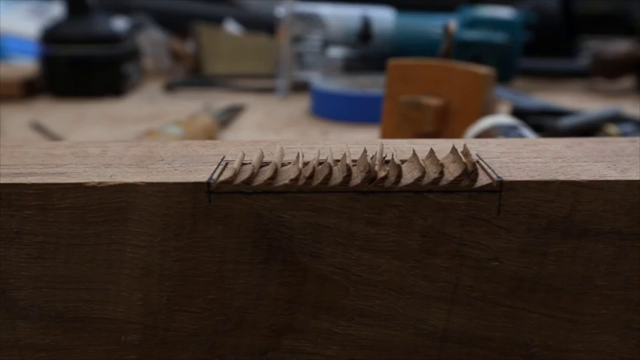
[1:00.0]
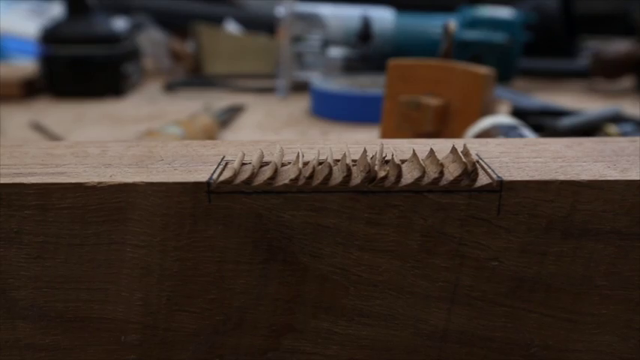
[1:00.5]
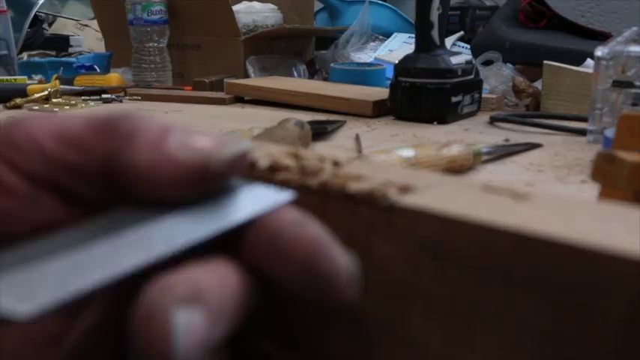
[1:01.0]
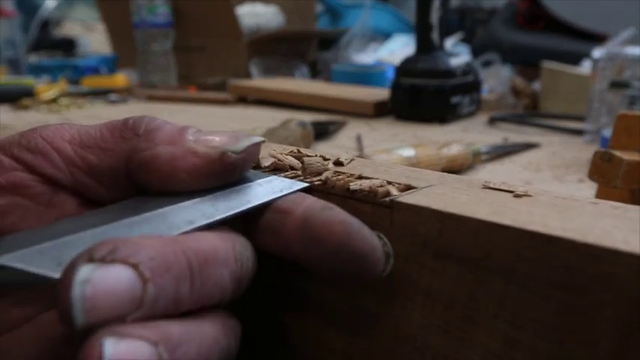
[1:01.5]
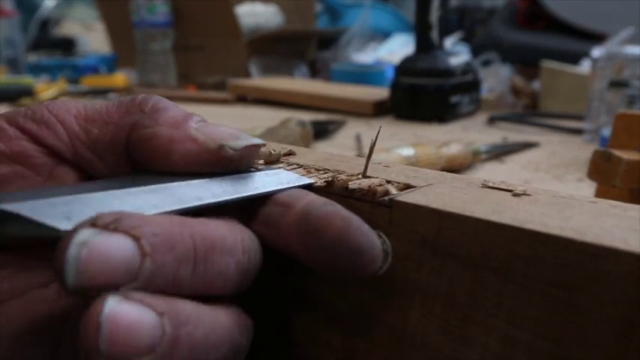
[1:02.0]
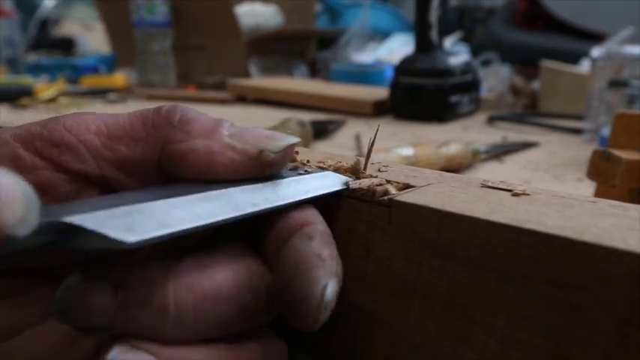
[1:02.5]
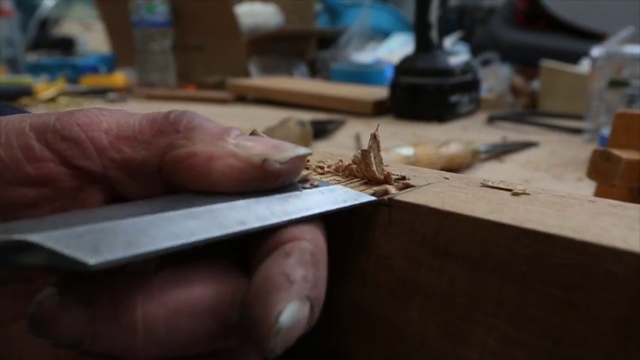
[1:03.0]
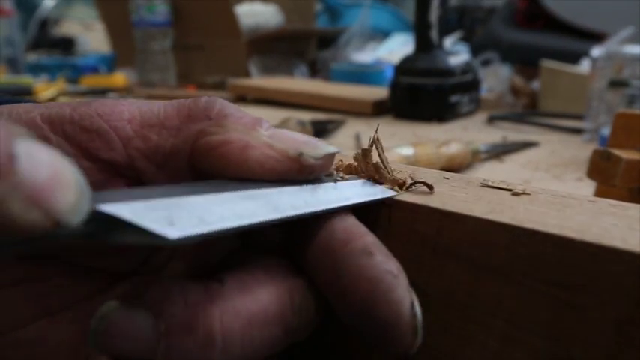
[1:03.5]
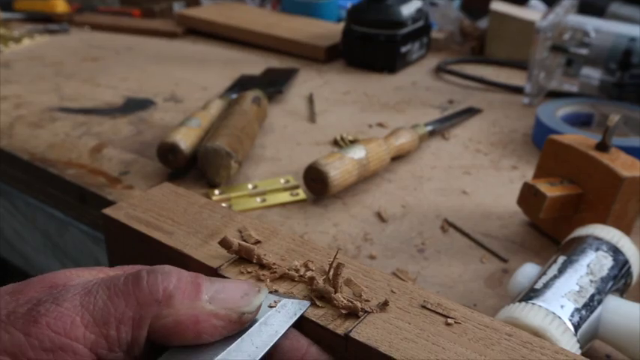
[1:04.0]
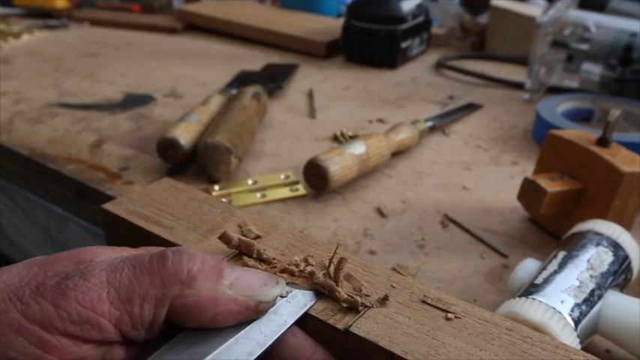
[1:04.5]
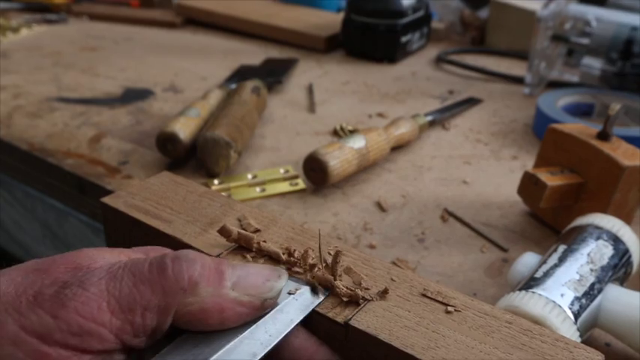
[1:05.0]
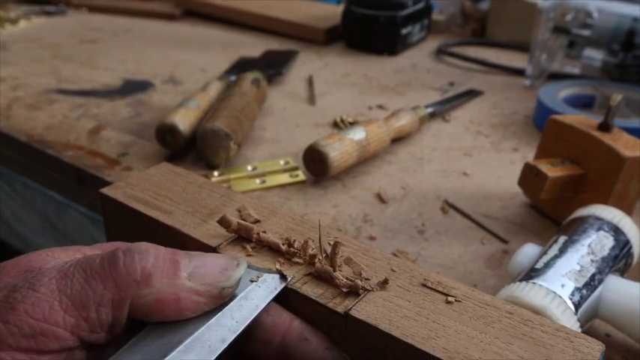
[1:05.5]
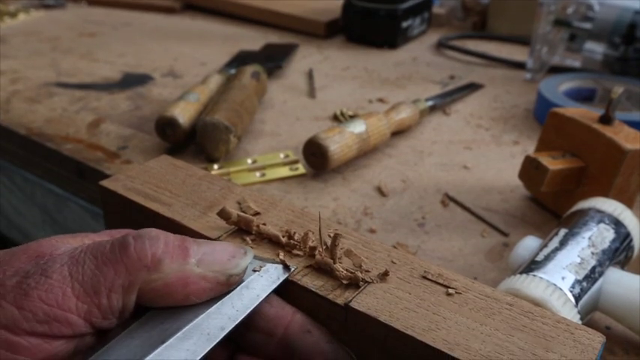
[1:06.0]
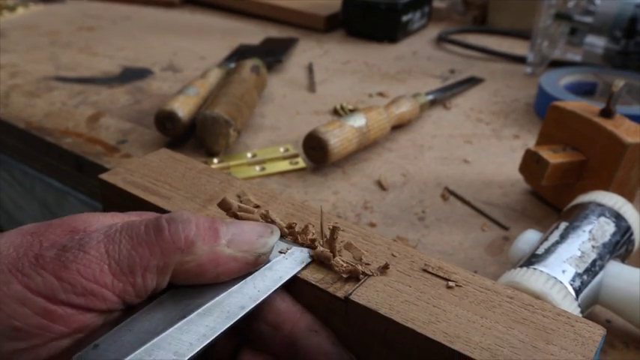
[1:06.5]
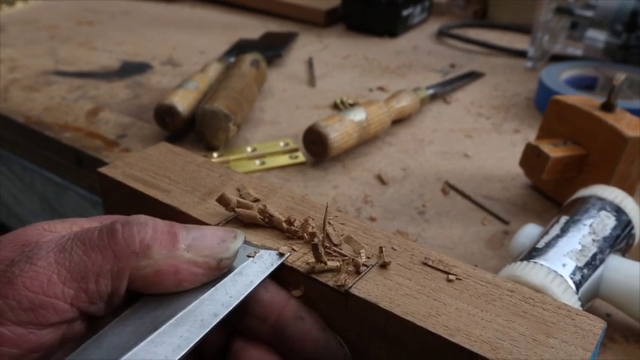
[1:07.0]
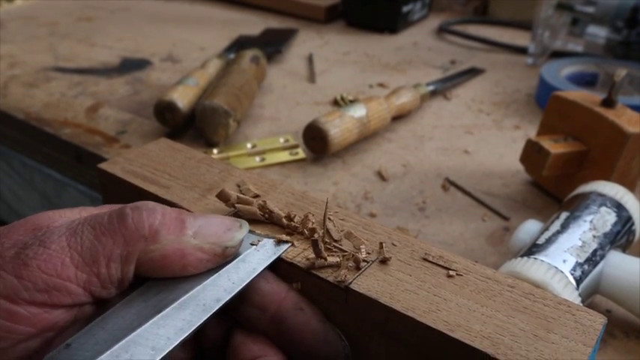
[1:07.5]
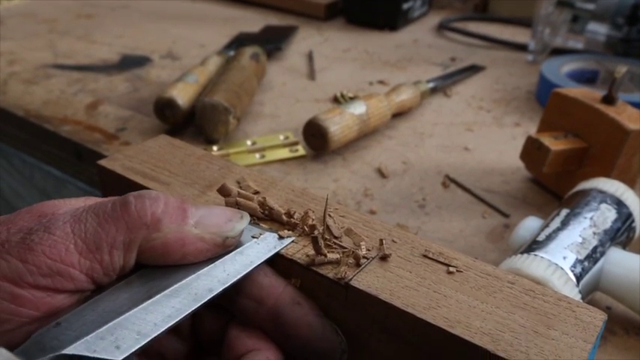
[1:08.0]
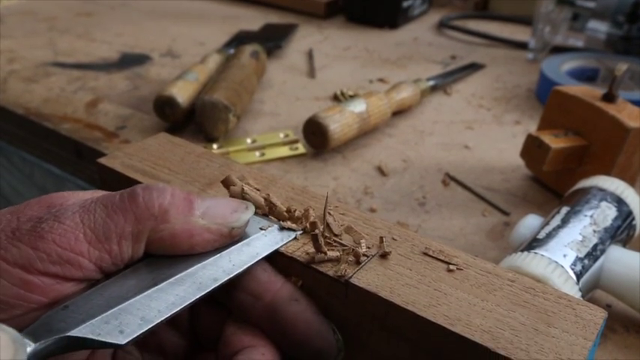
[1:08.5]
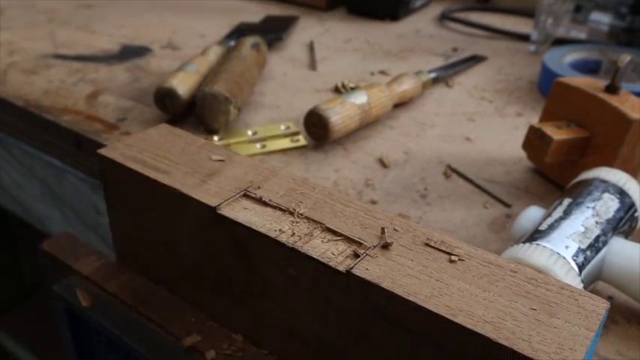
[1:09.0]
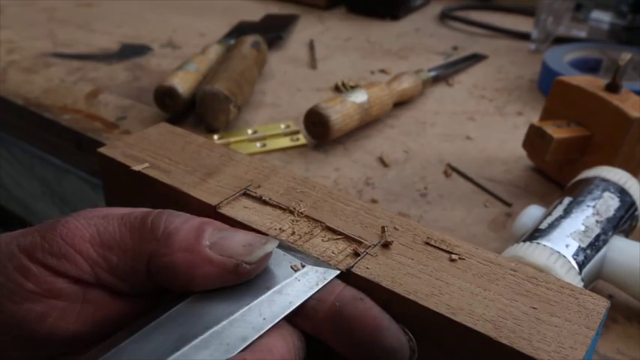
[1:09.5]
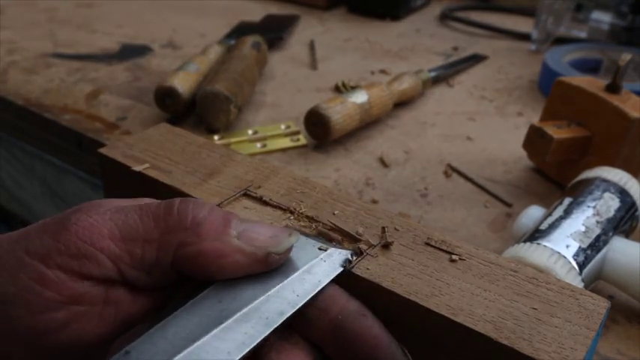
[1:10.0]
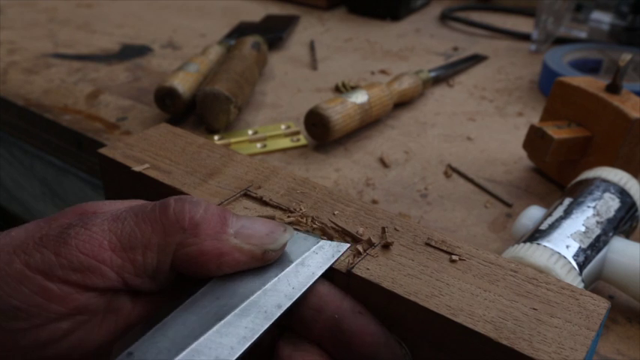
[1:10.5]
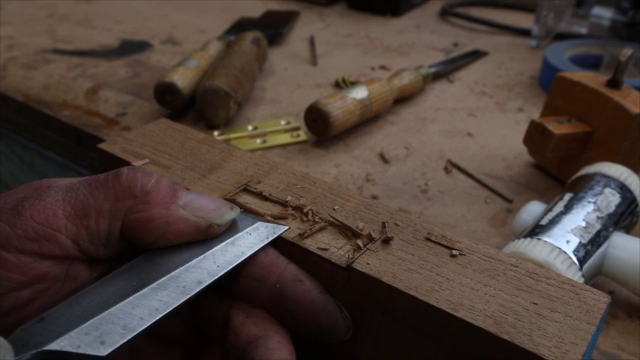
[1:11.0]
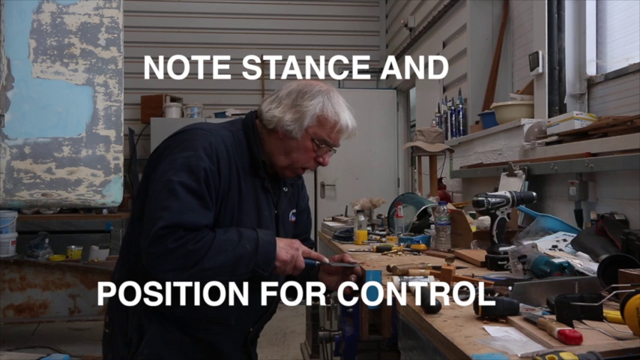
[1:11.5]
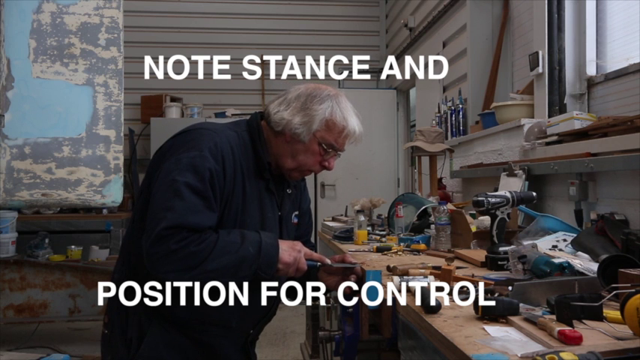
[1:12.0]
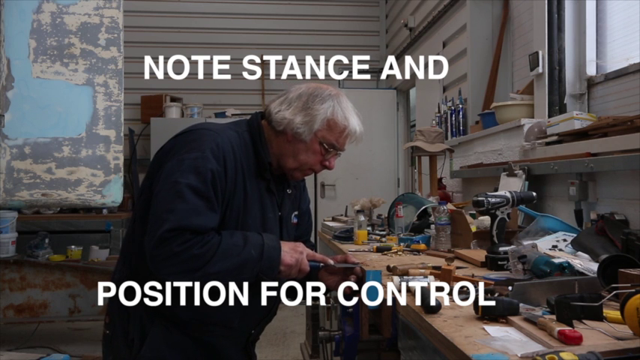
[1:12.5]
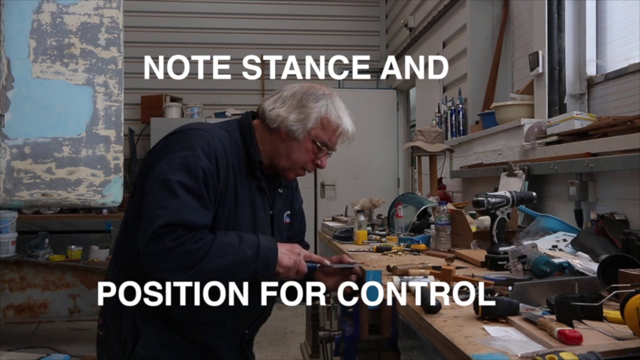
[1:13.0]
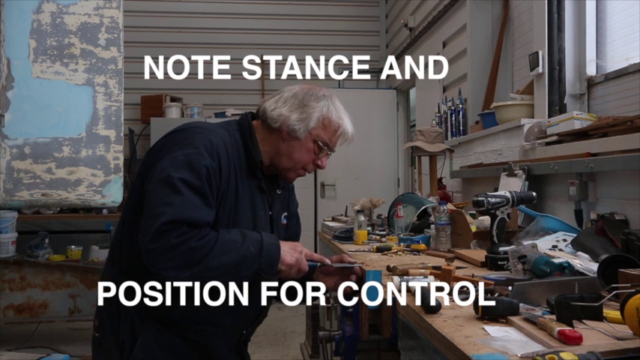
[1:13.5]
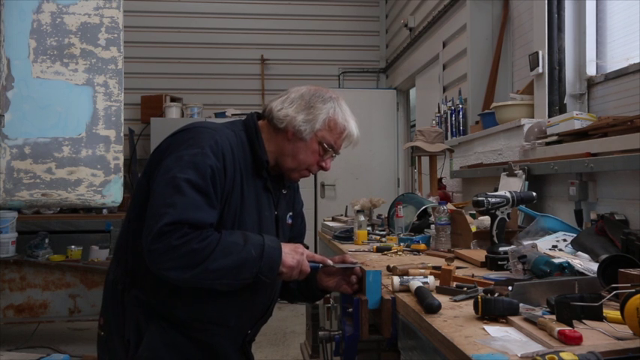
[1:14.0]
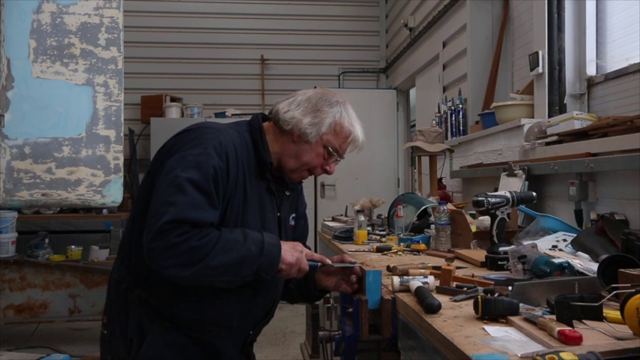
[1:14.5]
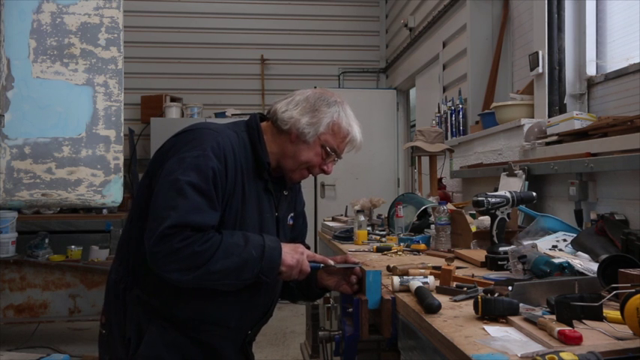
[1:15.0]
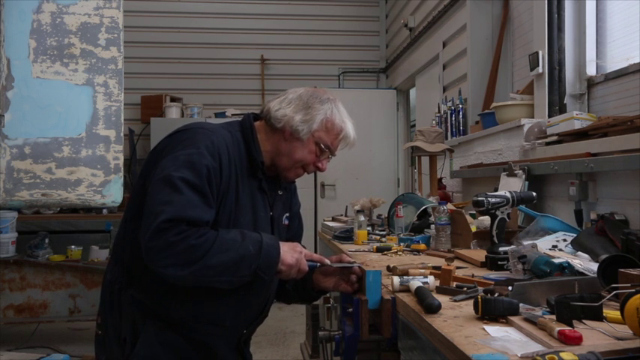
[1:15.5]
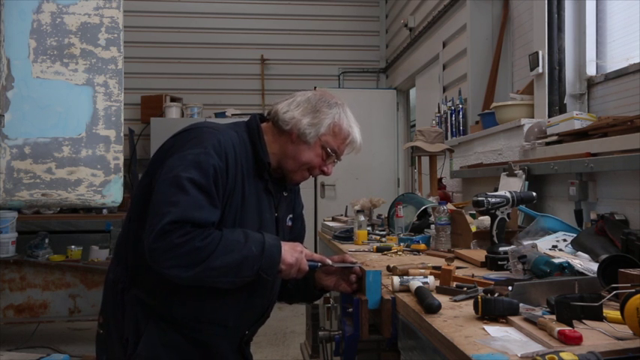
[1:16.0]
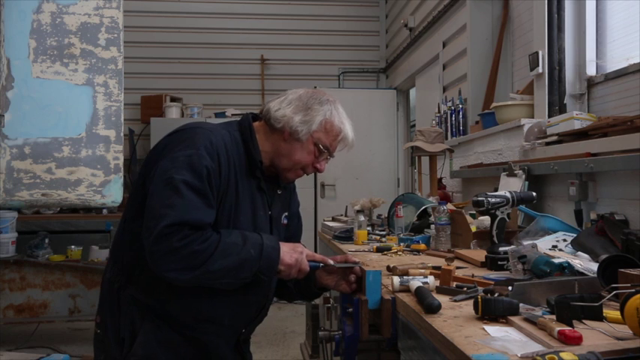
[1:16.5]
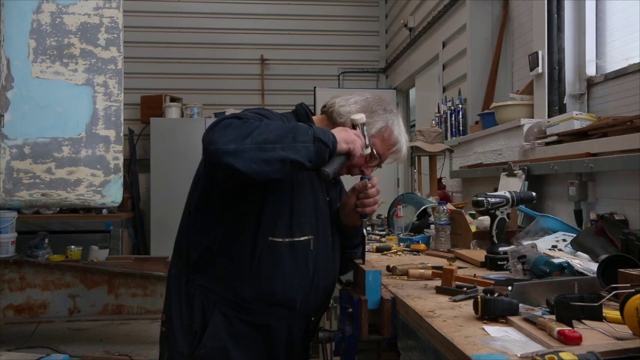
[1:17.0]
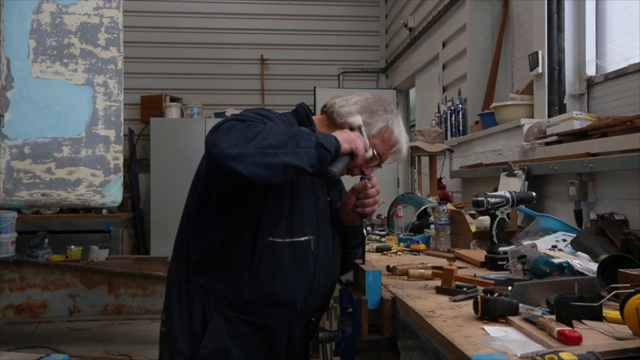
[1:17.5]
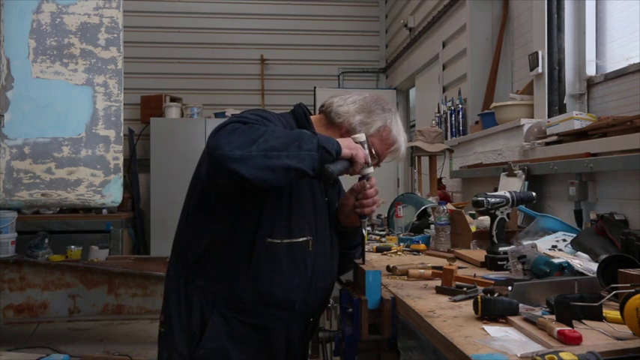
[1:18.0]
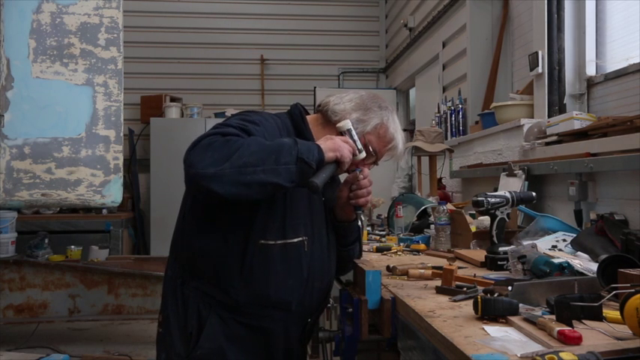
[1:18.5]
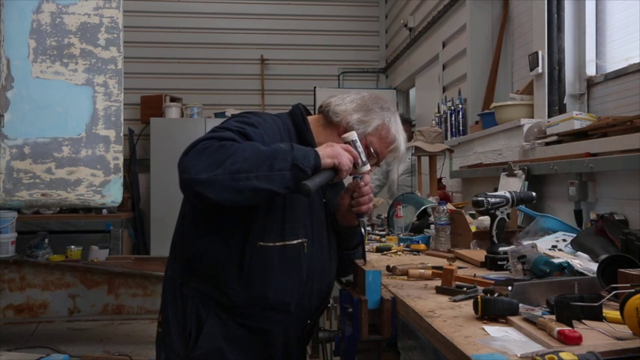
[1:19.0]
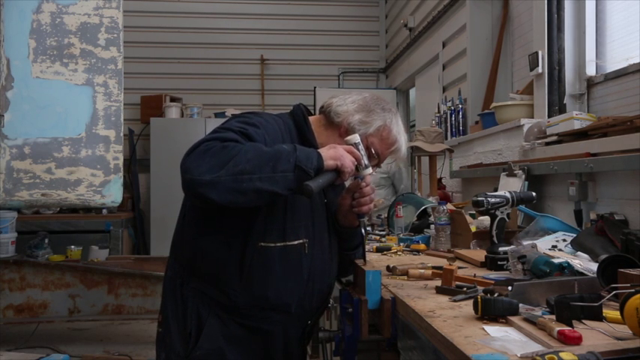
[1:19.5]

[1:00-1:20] A close-up shows the ridges he has made in the wood. He then removes the wood from a different angle, pushing the recessed wood out, and the wood looks to have a smooth surface. Text reads "note stance and position for control" as he leans over and in to take out the wood. A wider shot shows tools everywhere; the work table has a drill and various other tools and items. The wall suggests this may be some kind of storage area.